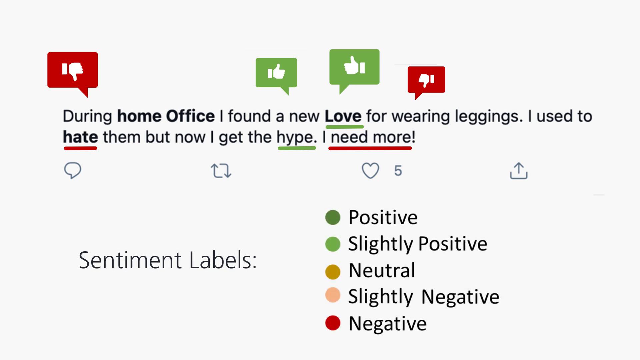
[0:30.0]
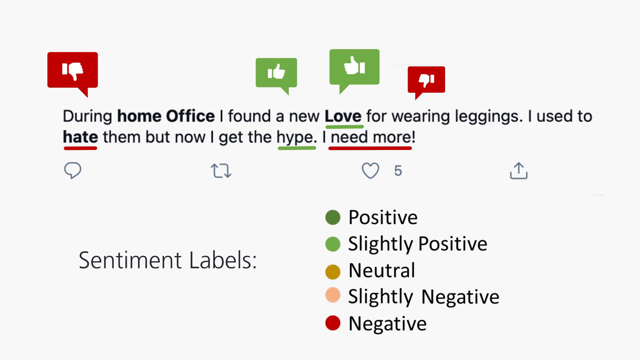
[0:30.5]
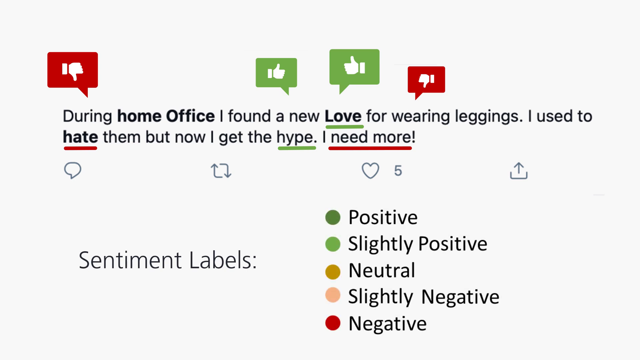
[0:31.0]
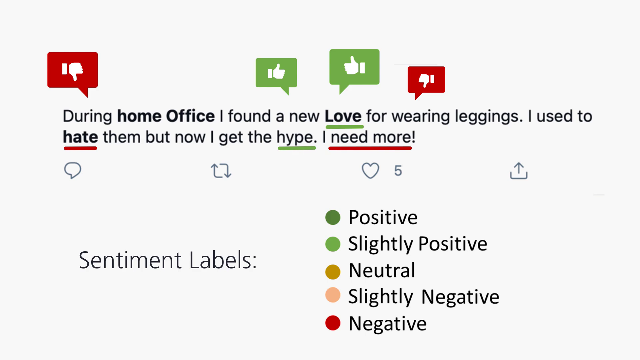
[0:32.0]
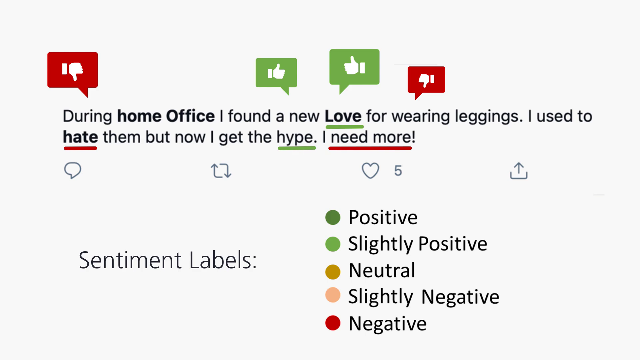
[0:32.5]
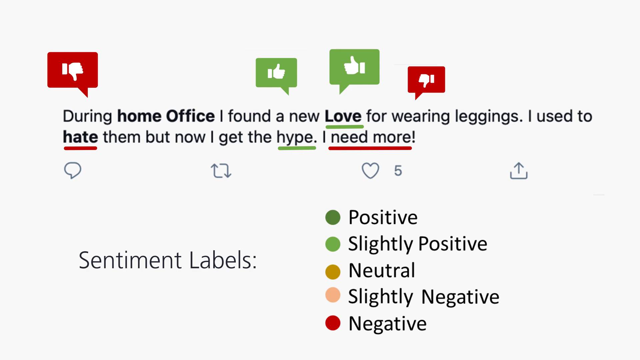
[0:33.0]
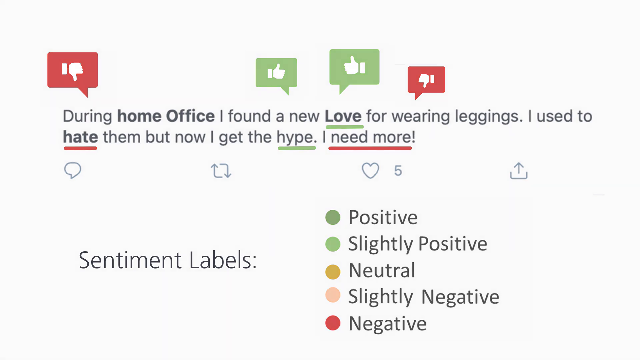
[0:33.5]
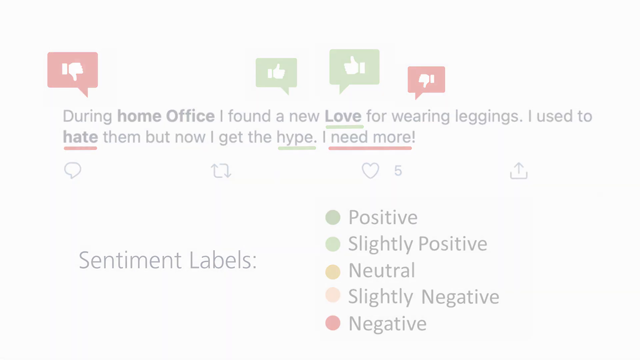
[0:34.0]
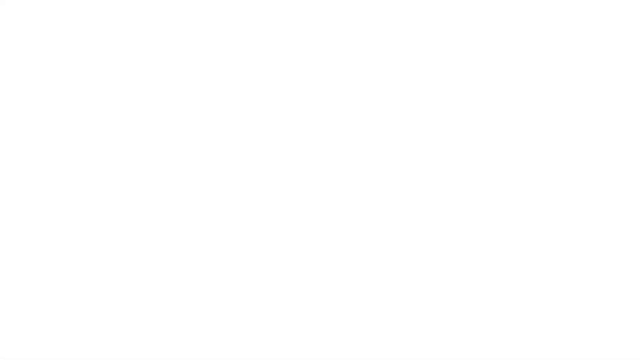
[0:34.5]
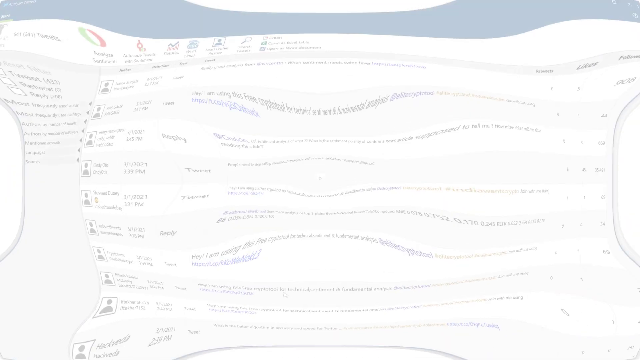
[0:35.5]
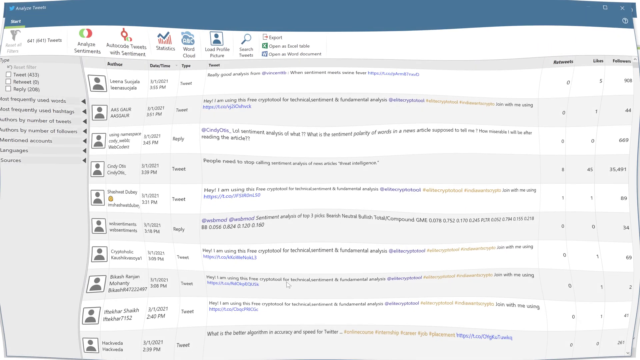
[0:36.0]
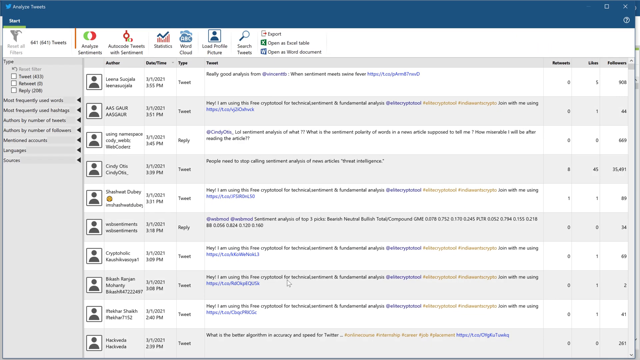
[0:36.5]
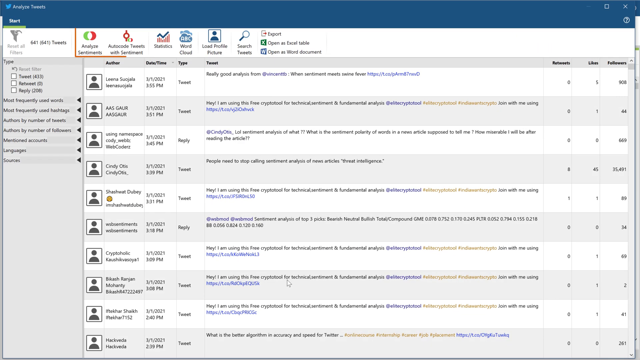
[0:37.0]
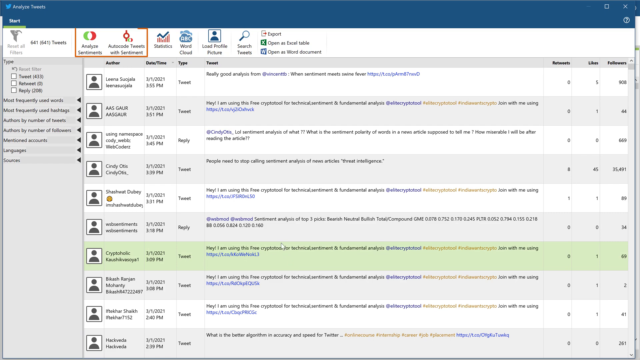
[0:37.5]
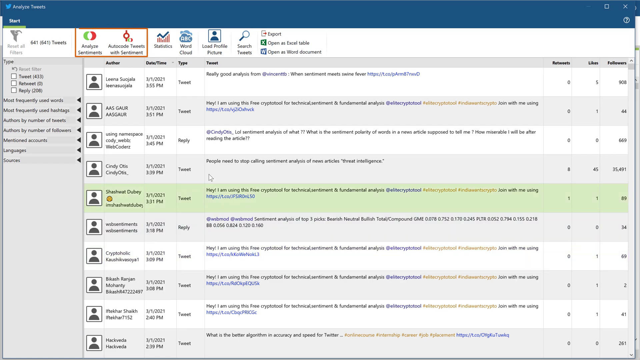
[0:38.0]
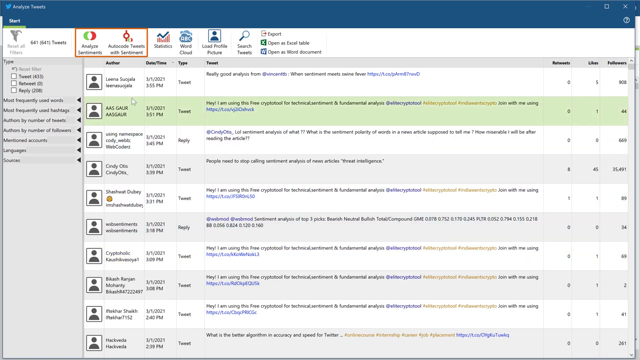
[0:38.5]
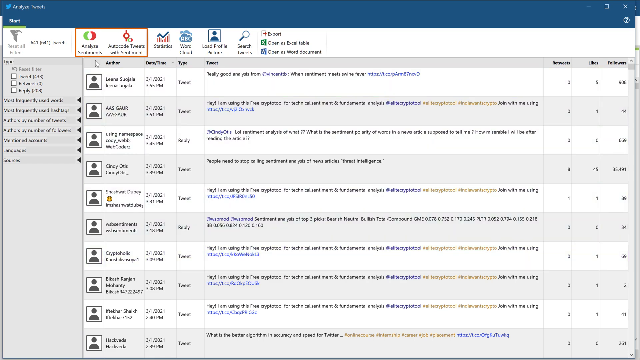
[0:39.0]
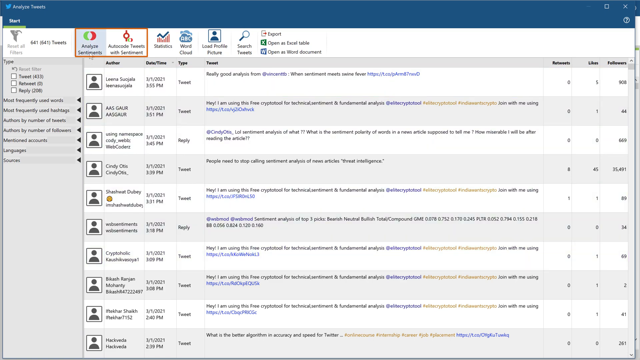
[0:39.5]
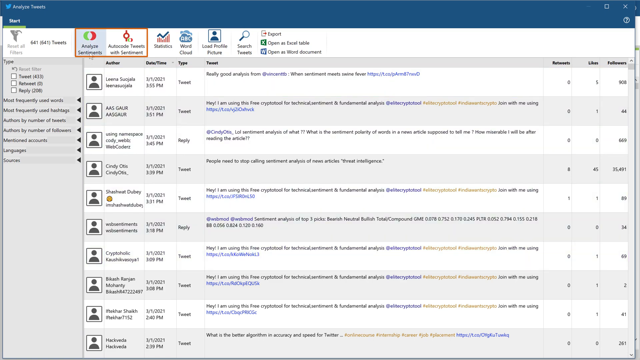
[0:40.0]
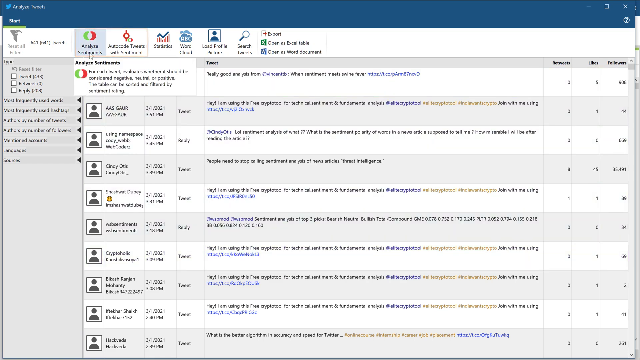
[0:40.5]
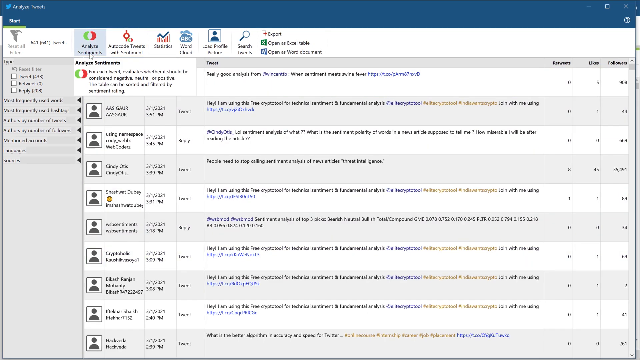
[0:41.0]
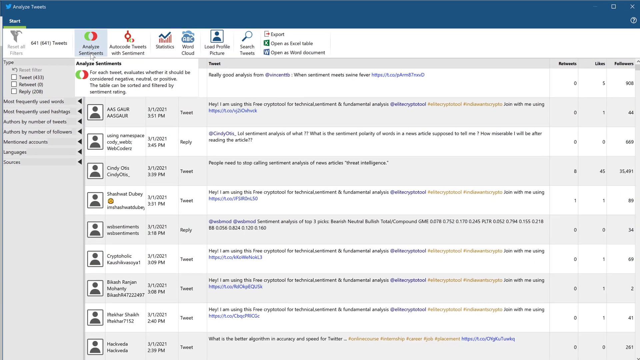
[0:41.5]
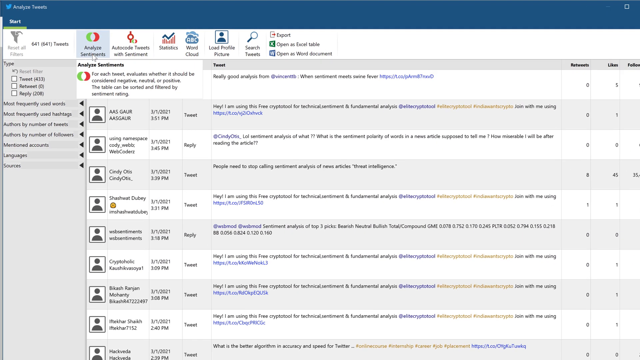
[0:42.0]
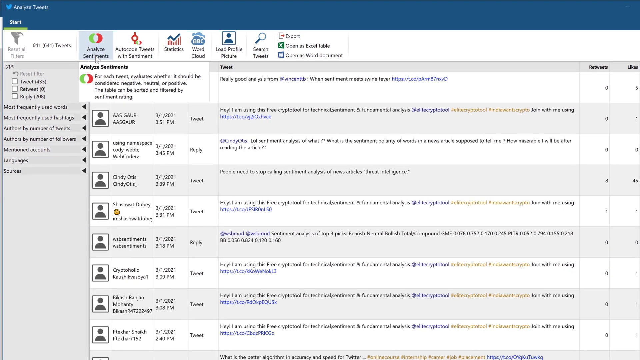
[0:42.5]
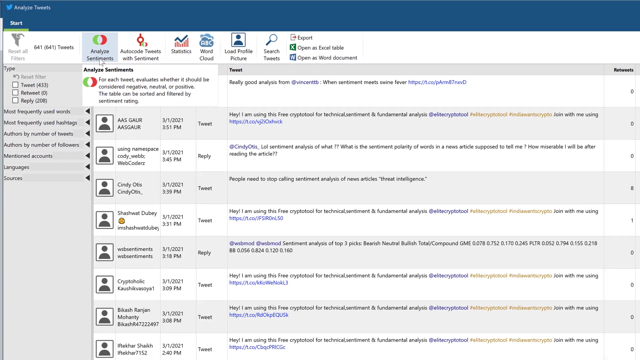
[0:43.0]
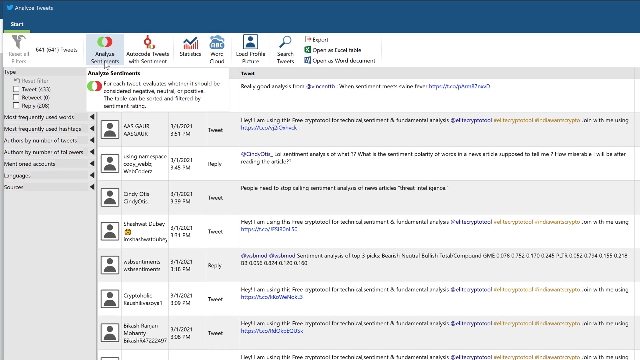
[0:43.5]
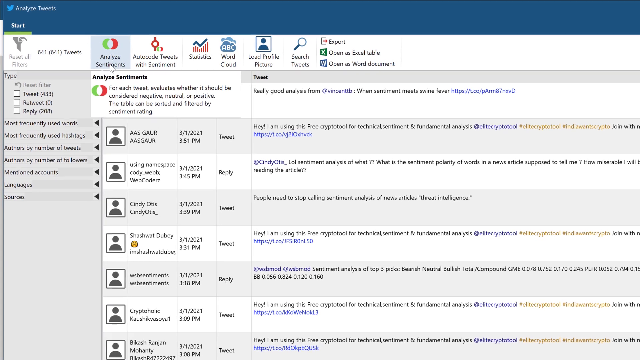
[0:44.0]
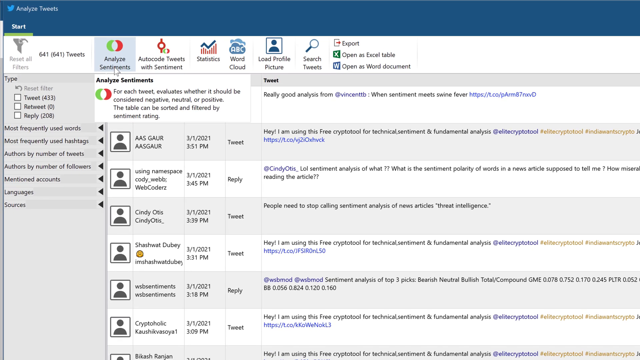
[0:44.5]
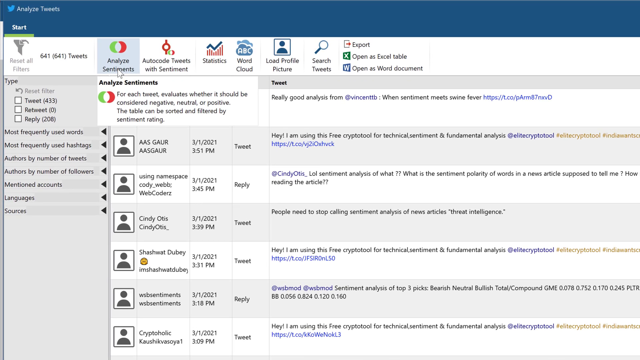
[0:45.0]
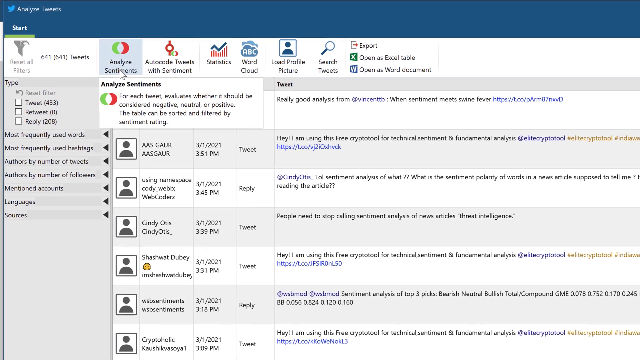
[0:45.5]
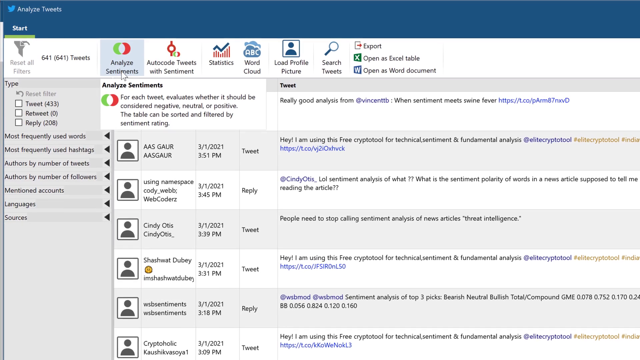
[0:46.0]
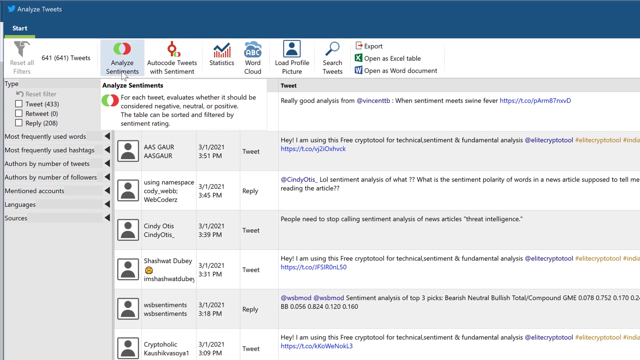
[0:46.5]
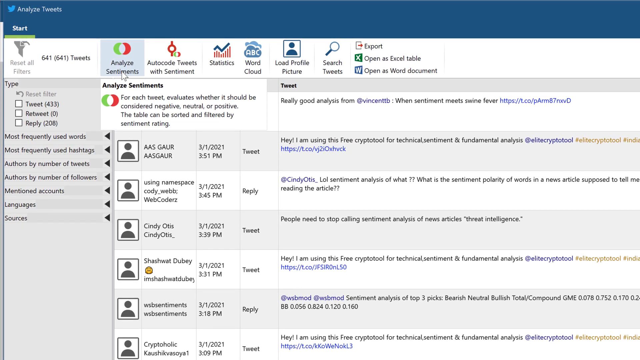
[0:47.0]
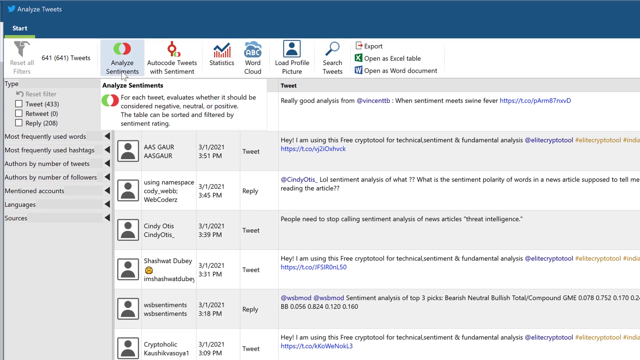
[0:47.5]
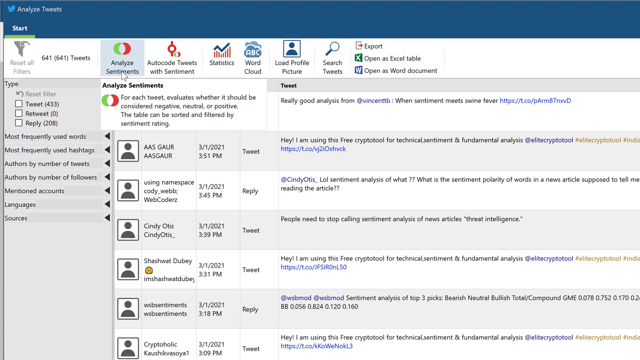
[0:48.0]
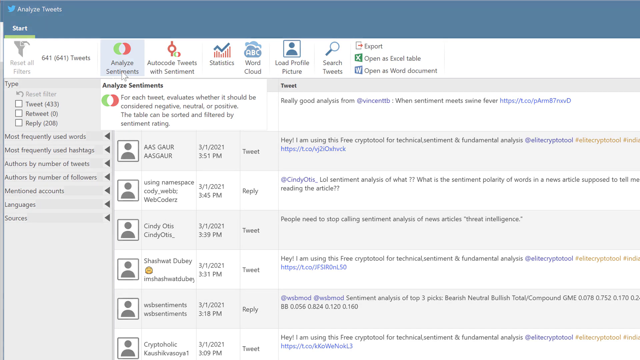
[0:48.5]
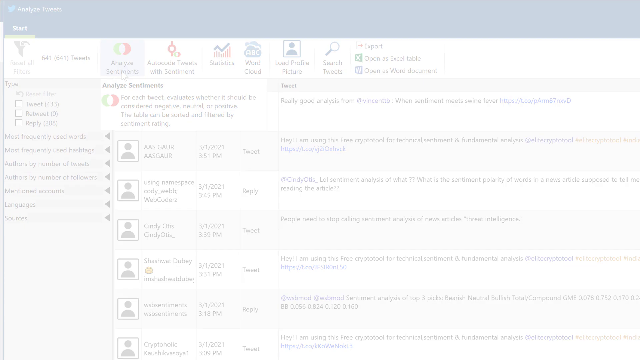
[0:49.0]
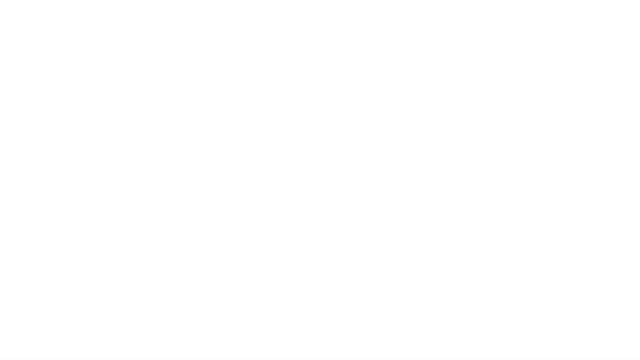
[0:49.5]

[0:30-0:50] The key stays on screen as a still, reading "sentiment labels" with five dots in different colors: green for positive, light green for slightly positive, brown for neutral, a peach color for slightly negative, and red for negative. The screen wipes back to the dashboard, where two logos and boxes of text at the top reading "analyze sentiments" and "auto-code tweets with sentiment" are highlighted. The cursor moves over different columns in the center, where tweets are listed along with the date they were written and their author. The cursor hovers over the analyze sentiments tab and a dropdown says "for each tweet, evaluates whether it should be considered negative, neutral, or positive. The table can be sorted and filtered by sentiment rating." The view zooms in on that text, and a total of 641 tweets is visible. It then pulls back out, and as the cursor moves, those columns are highlighted in green.